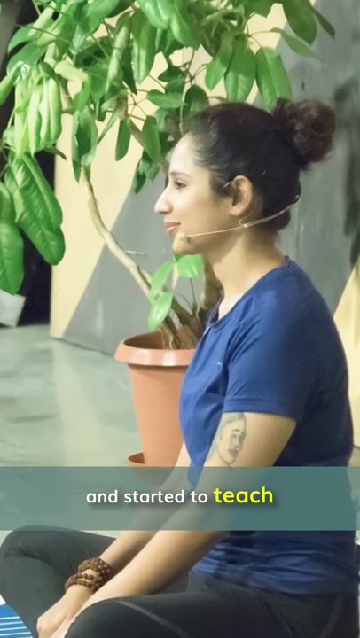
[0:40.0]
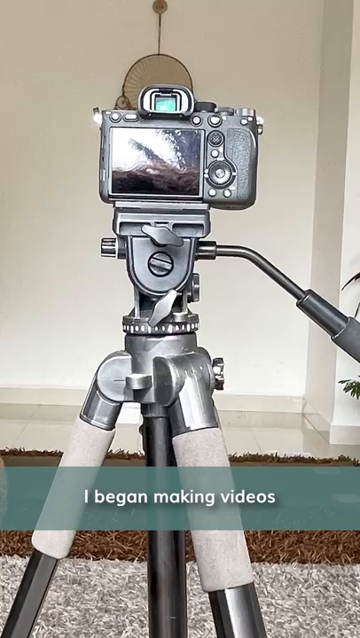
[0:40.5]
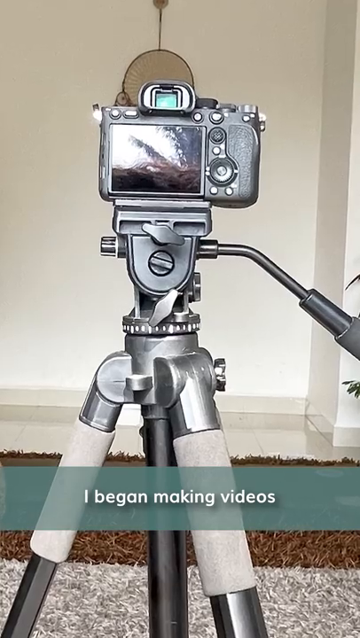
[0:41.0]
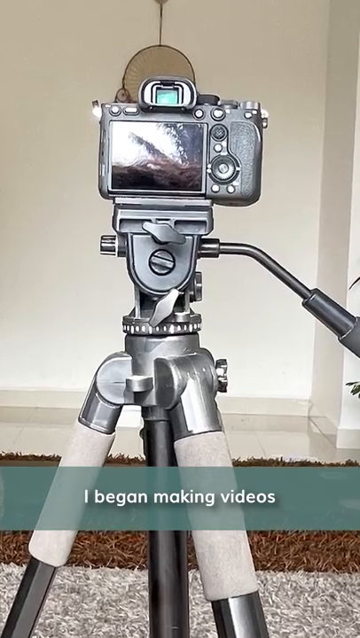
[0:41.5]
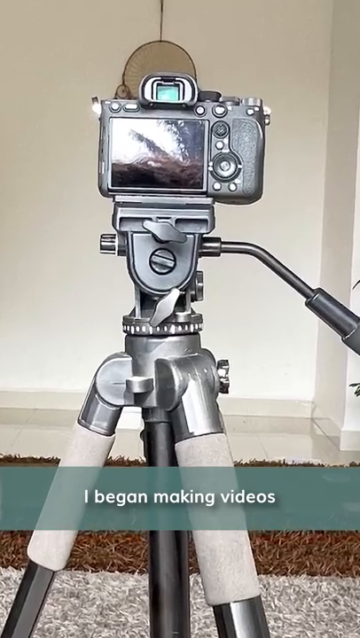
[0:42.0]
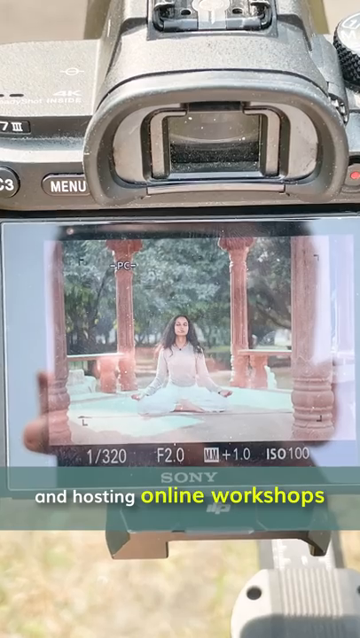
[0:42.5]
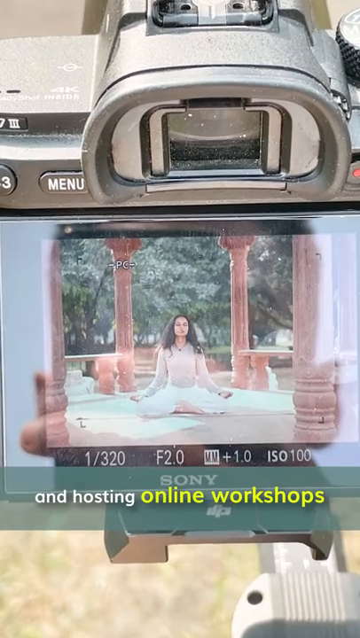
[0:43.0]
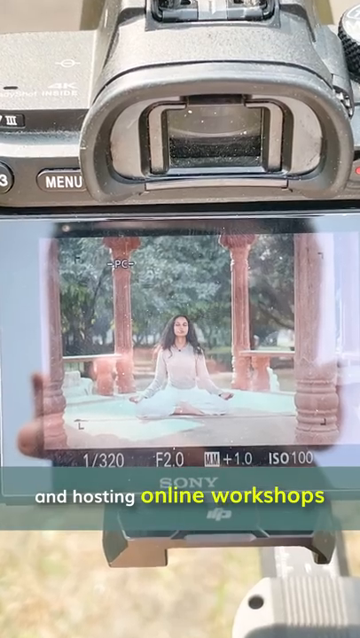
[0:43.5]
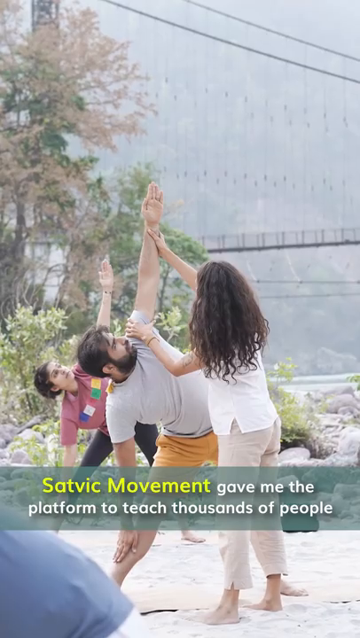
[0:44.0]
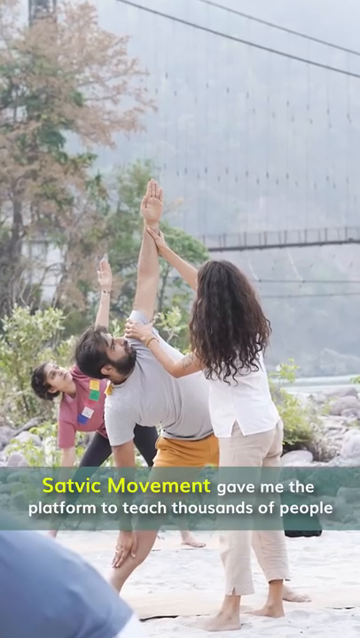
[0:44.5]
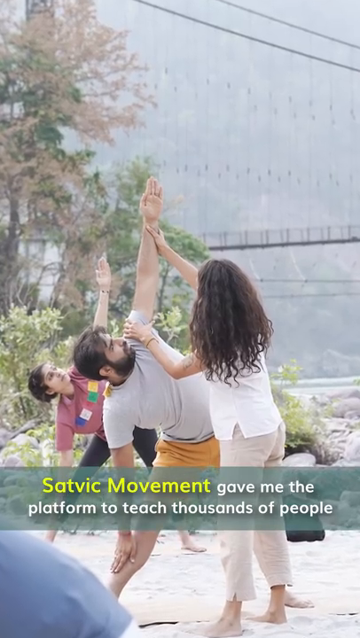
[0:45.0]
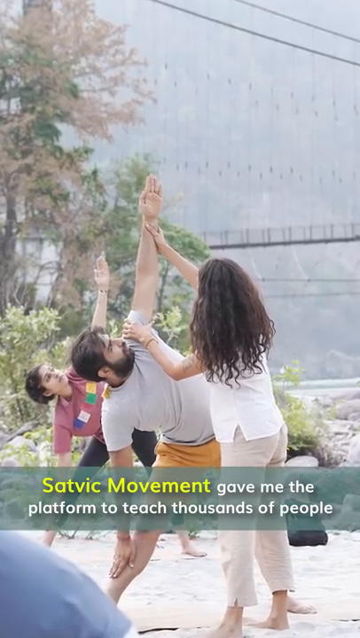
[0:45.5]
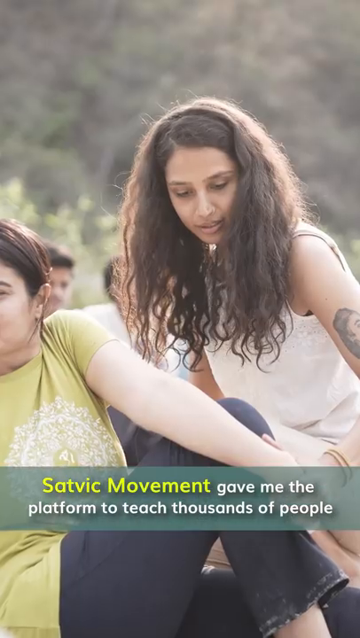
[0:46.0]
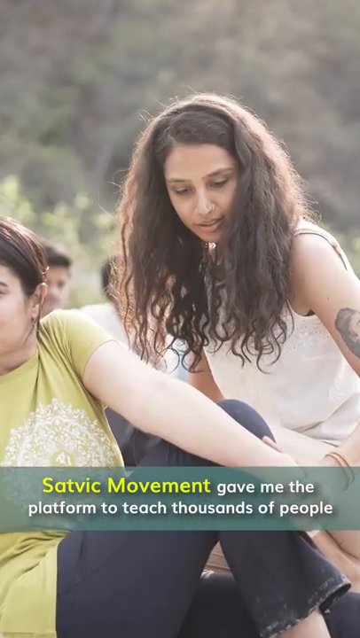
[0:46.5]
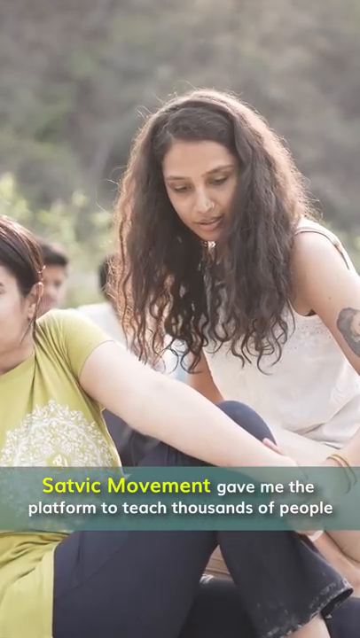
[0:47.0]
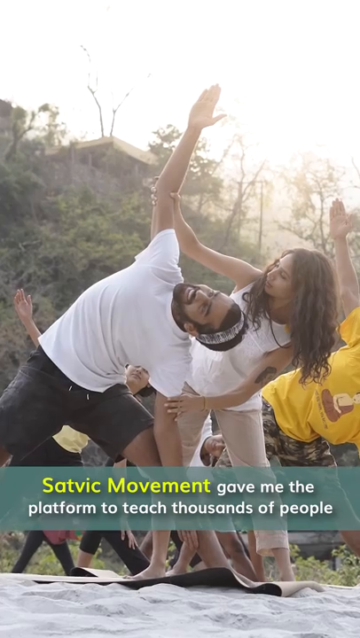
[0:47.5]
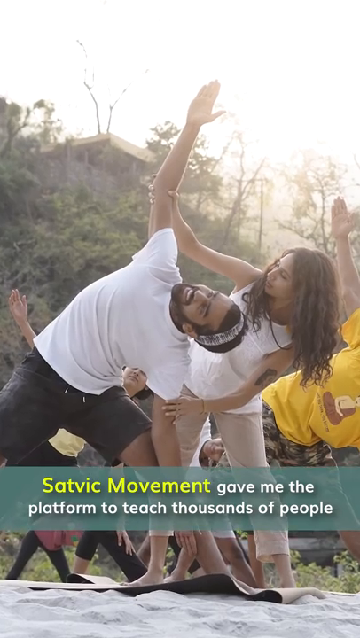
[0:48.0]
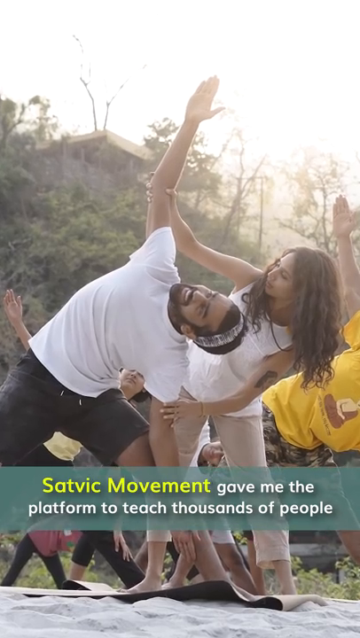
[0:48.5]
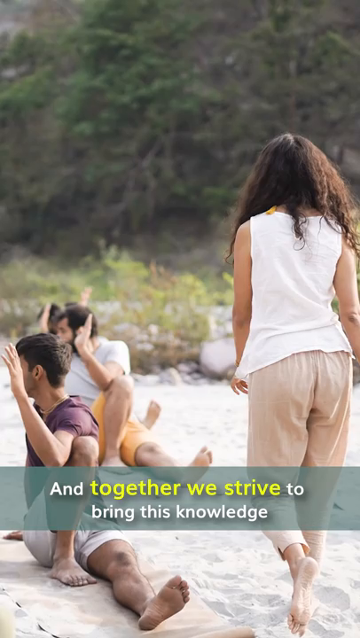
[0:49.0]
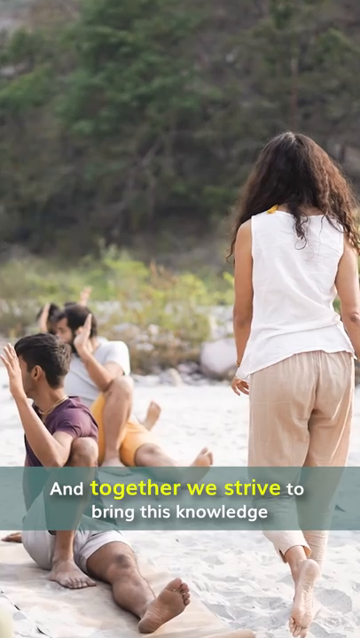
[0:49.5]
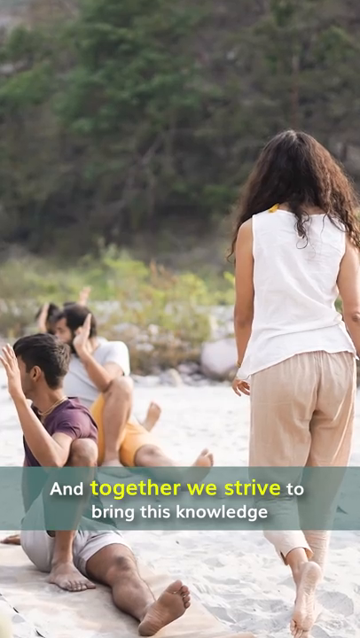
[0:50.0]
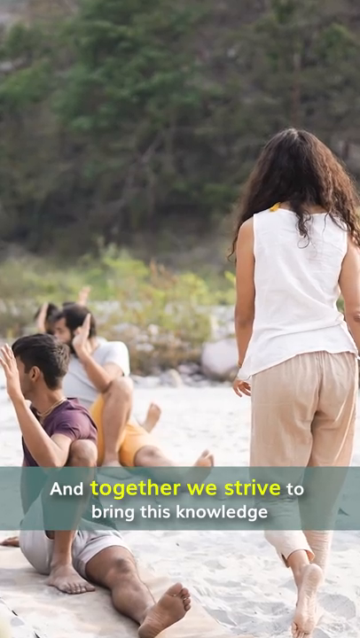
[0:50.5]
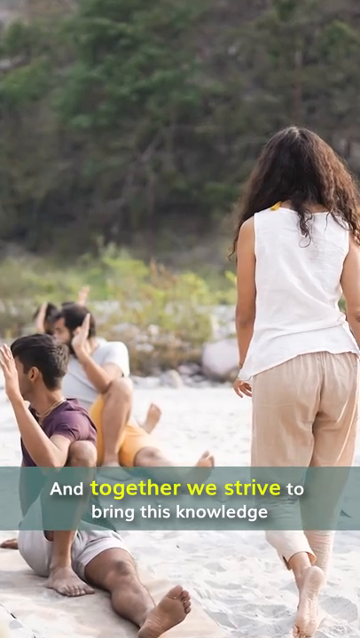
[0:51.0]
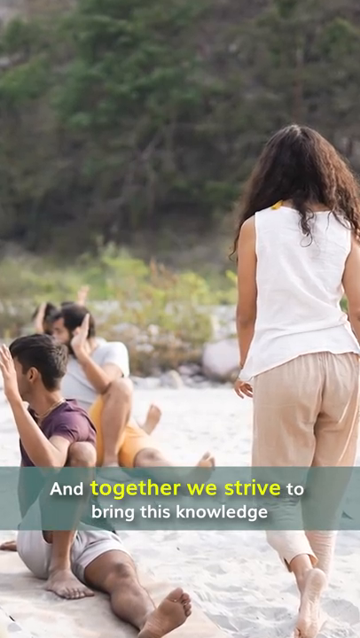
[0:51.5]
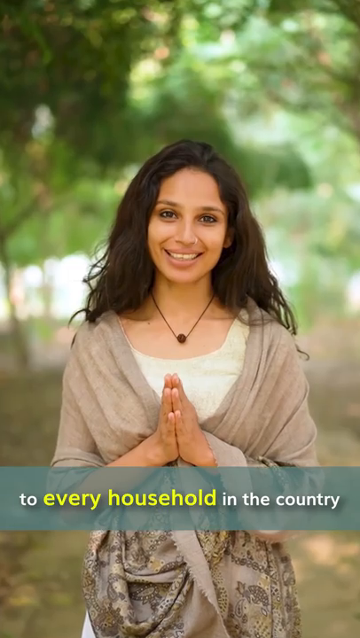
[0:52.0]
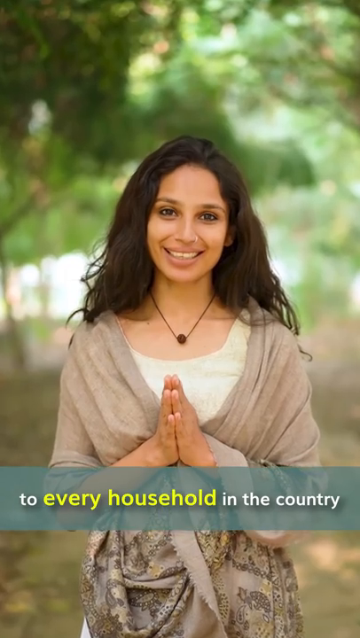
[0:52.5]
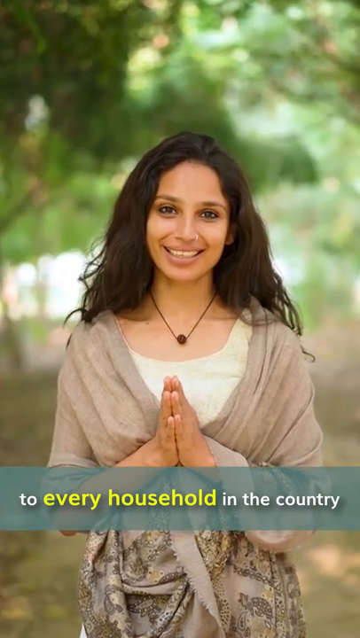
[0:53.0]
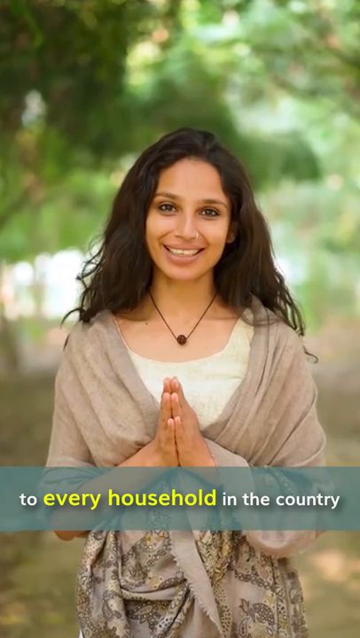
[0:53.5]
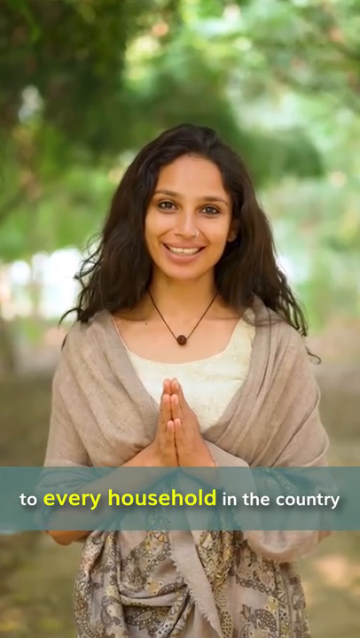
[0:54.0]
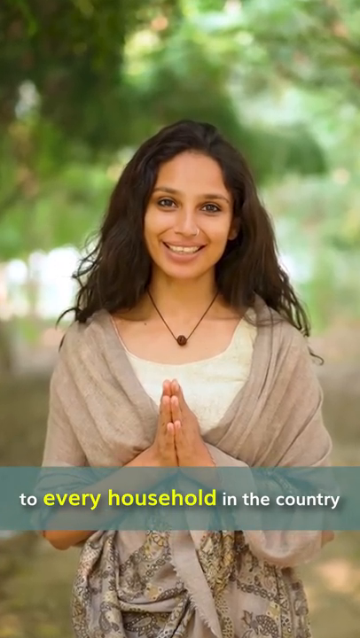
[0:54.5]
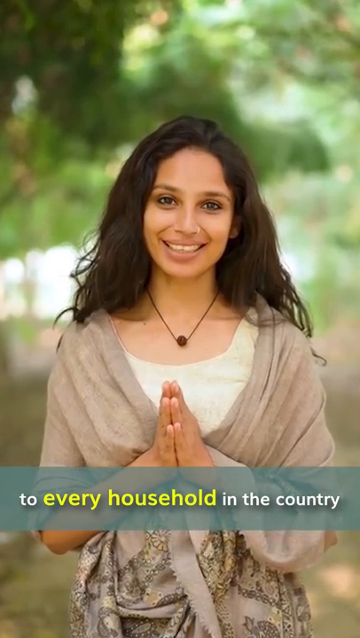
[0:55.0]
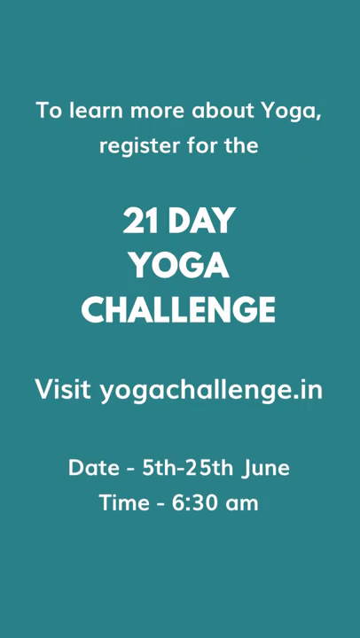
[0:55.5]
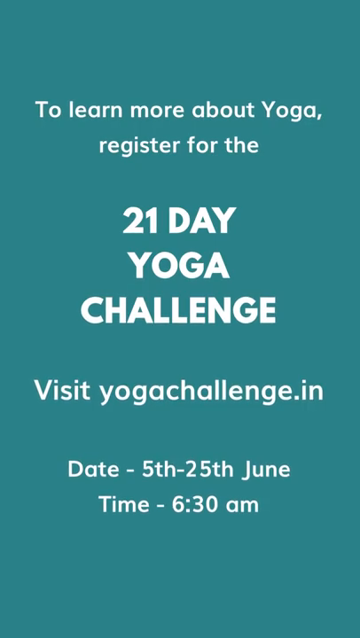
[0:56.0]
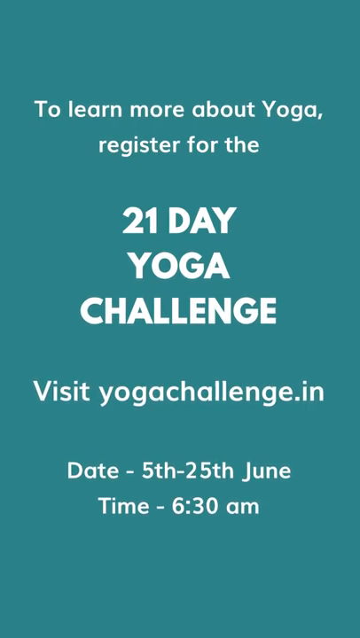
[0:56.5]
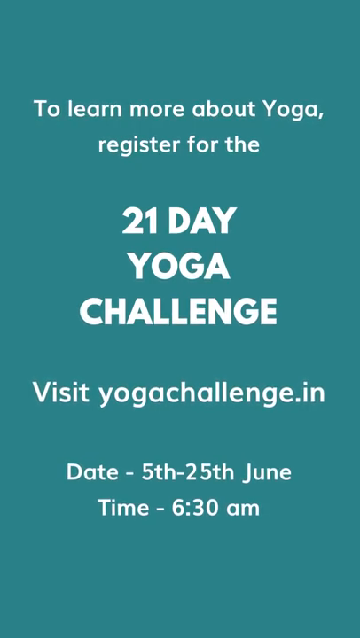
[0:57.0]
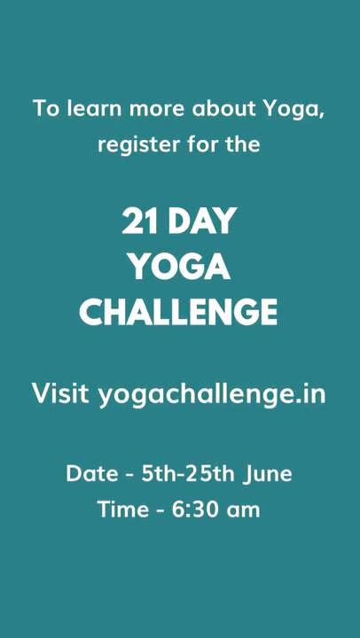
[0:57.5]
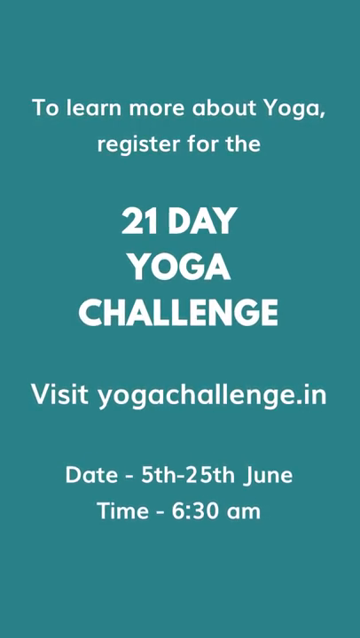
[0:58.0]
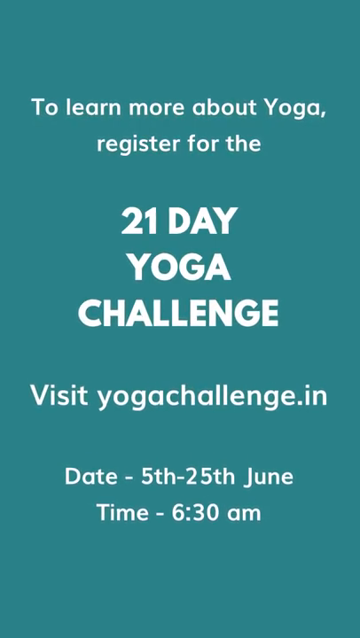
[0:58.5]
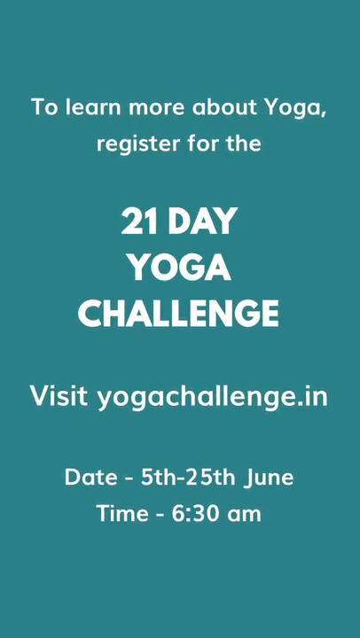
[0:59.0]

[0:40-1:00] The young woman appears with a full head of hair that comes past her shoulders, looking happy and healthy. A 21-day yoga challenge is advertised with a date and a time. Text invites viewers to learn more about yoga, register for the 21-day yoga challenge and visit yogachallenge.in, says she will be hosting yoga workshops, and states that together they will strive to bring this knowledge to every household in the country. The dates are the 5th through the 25th of June and the time is 6:30 a.m.; no year is given.